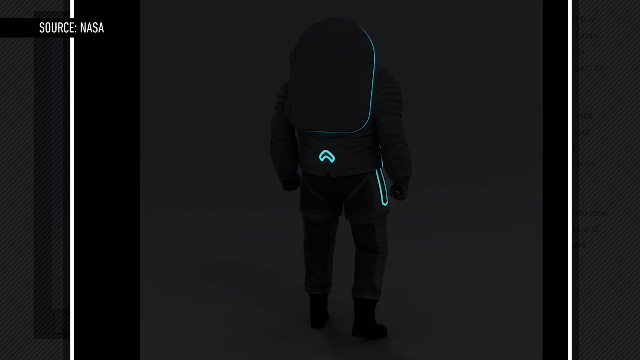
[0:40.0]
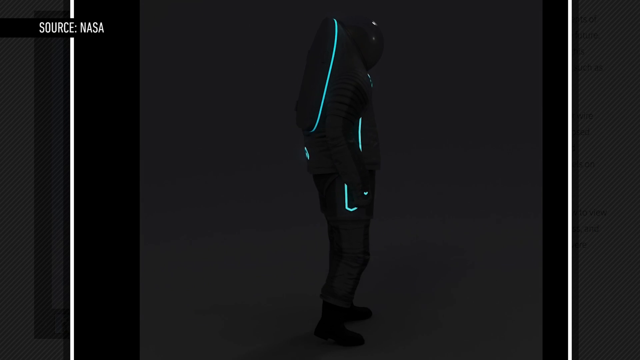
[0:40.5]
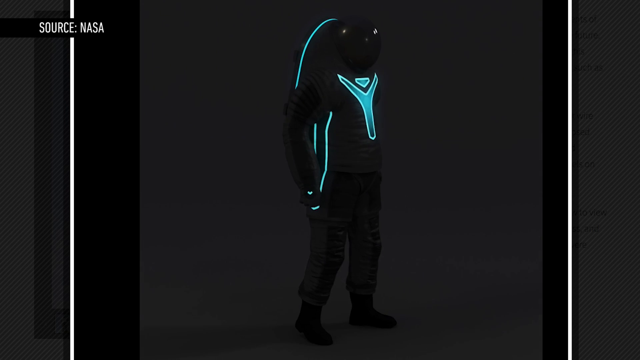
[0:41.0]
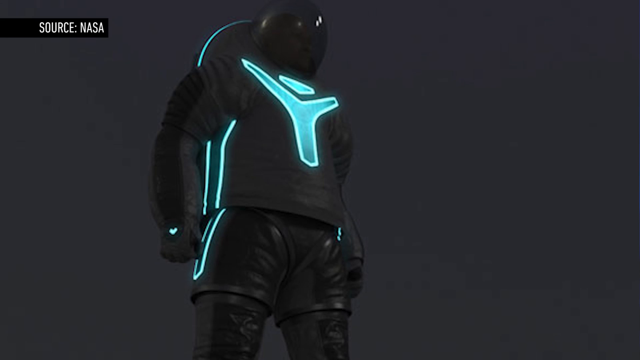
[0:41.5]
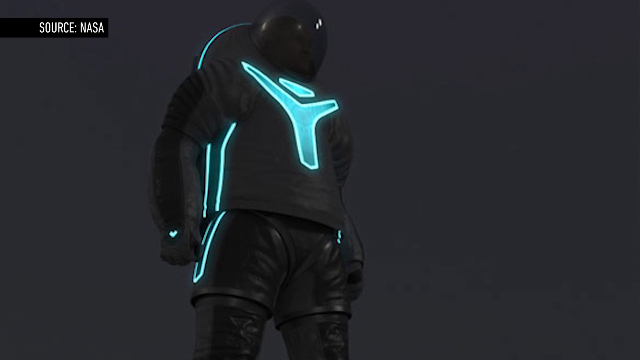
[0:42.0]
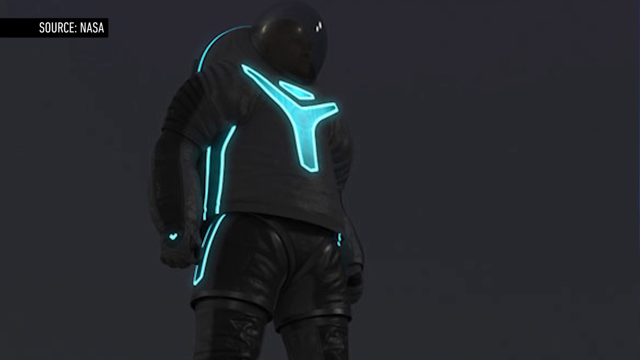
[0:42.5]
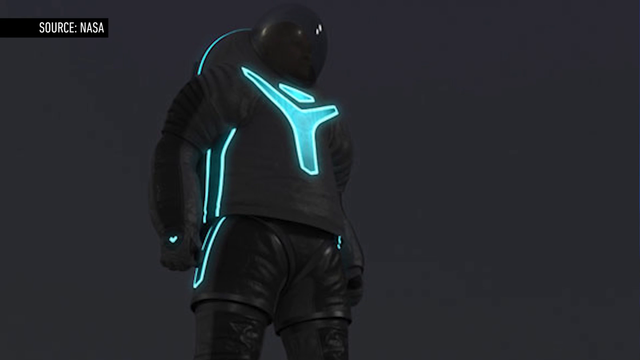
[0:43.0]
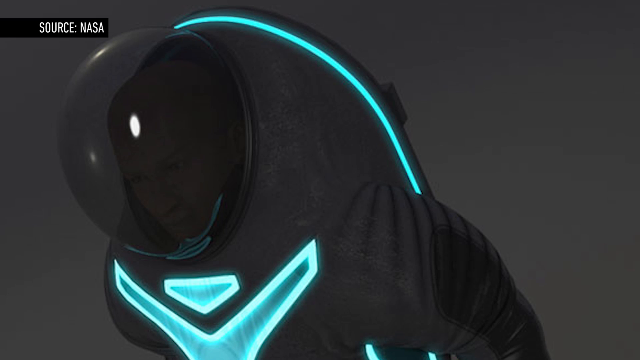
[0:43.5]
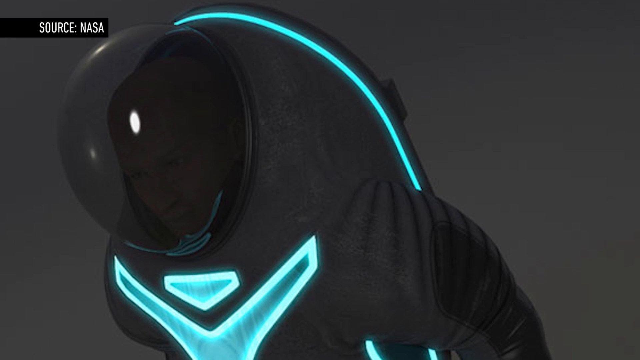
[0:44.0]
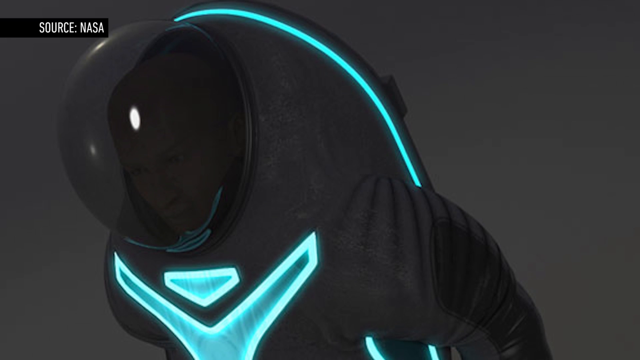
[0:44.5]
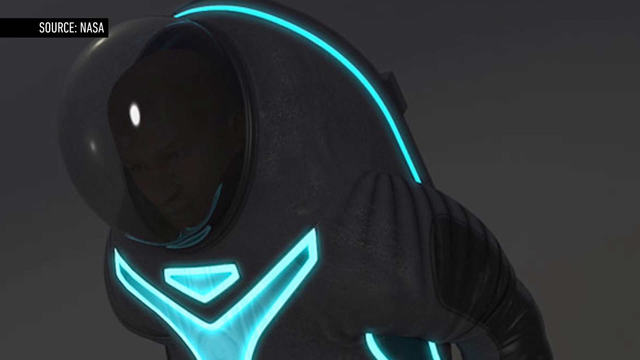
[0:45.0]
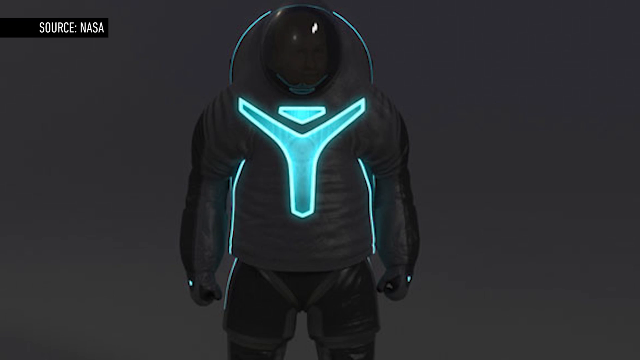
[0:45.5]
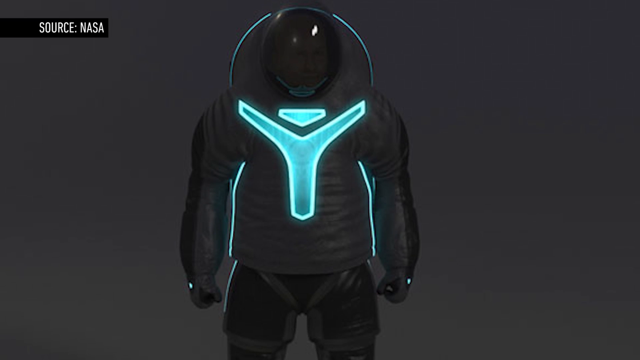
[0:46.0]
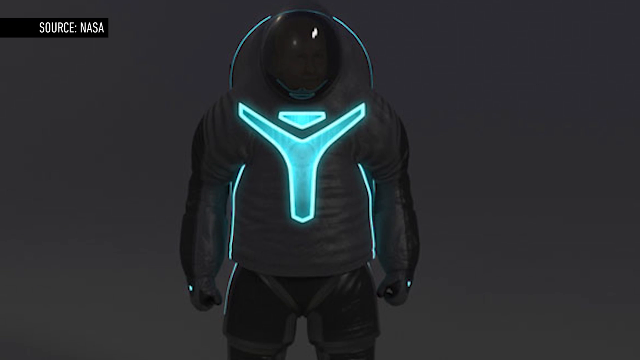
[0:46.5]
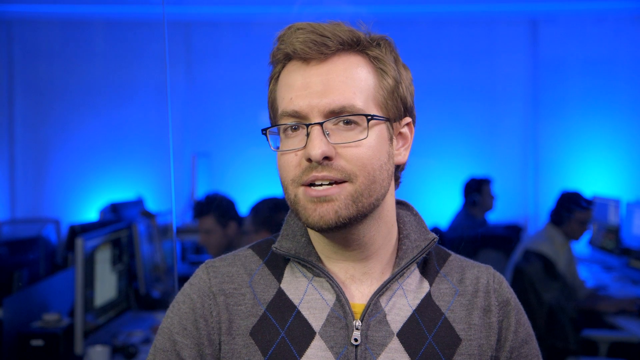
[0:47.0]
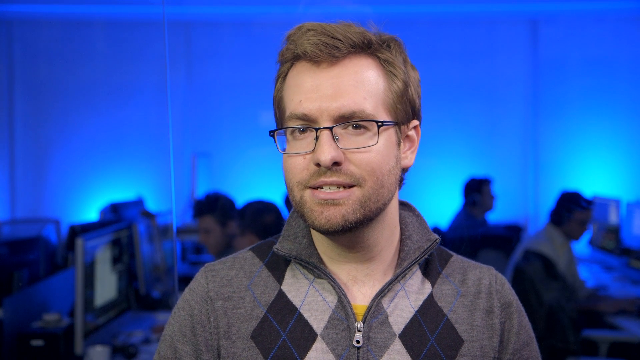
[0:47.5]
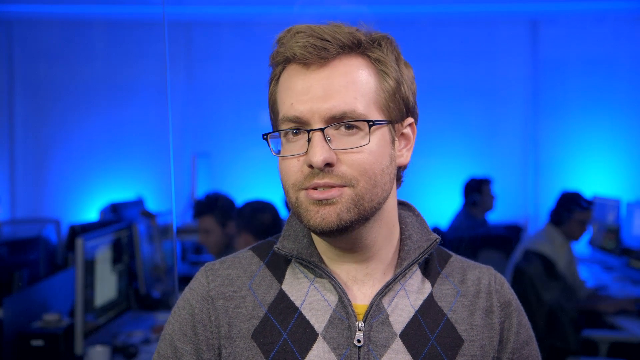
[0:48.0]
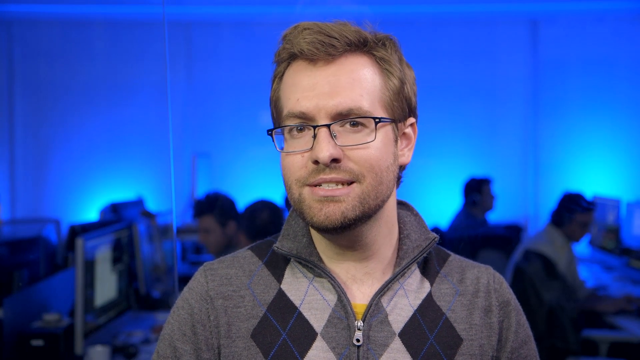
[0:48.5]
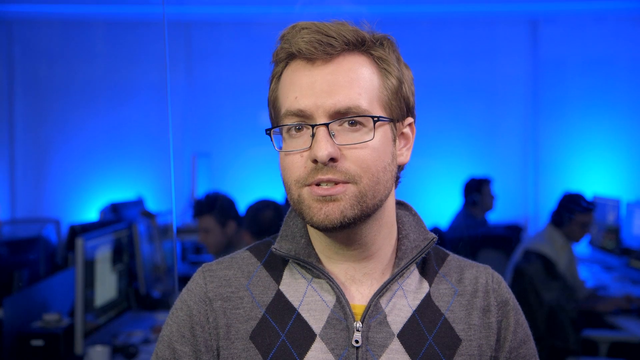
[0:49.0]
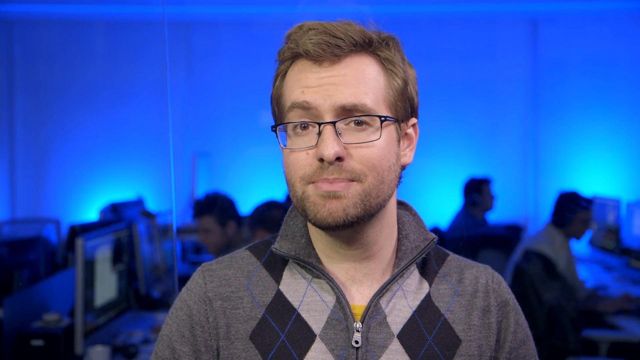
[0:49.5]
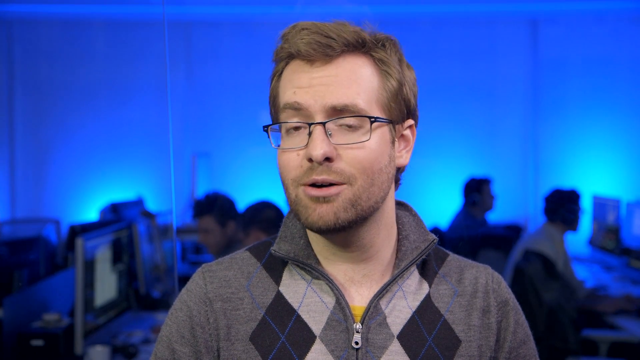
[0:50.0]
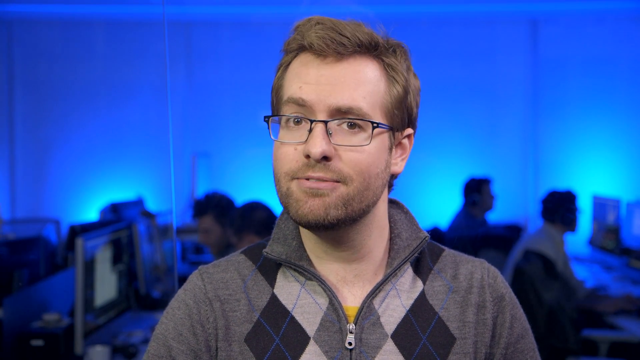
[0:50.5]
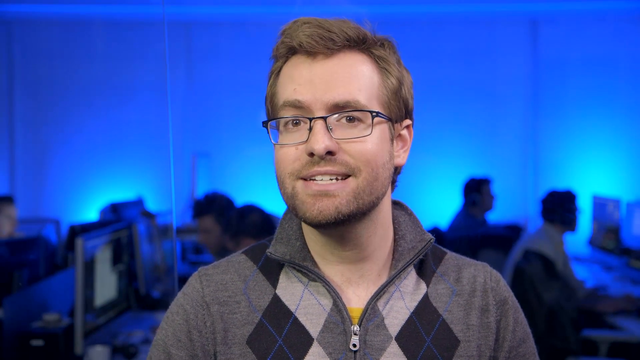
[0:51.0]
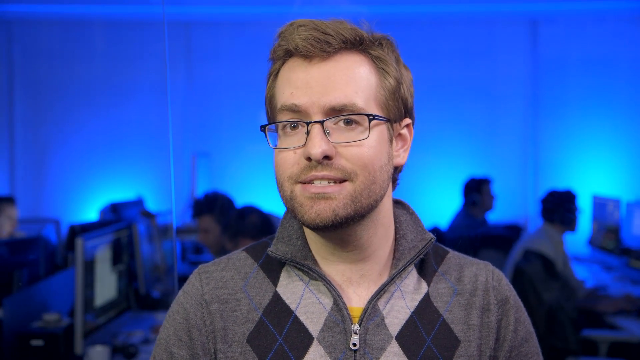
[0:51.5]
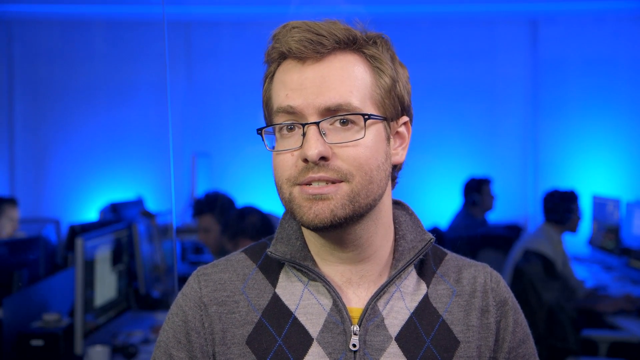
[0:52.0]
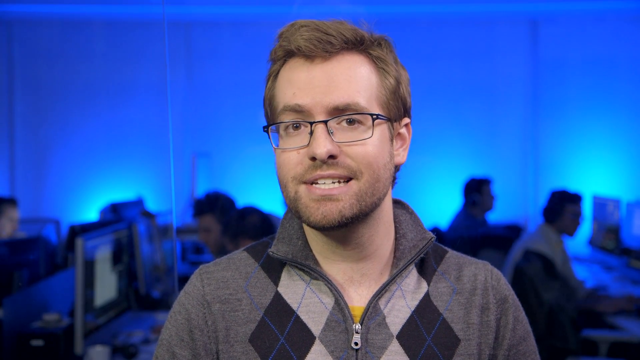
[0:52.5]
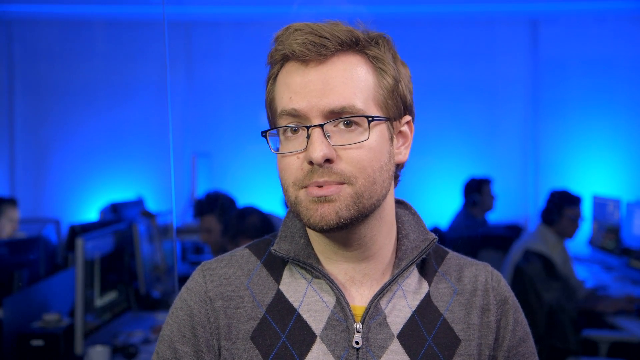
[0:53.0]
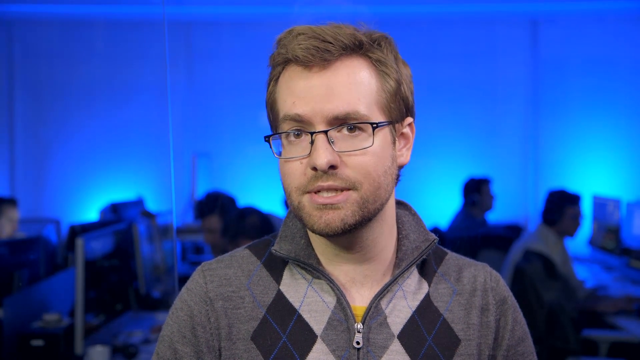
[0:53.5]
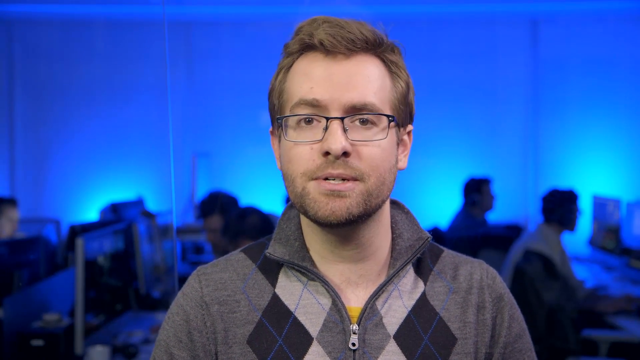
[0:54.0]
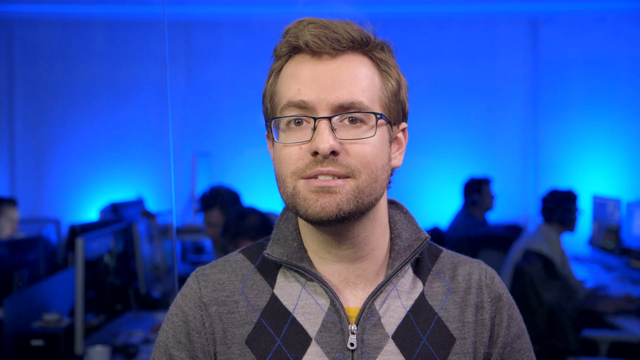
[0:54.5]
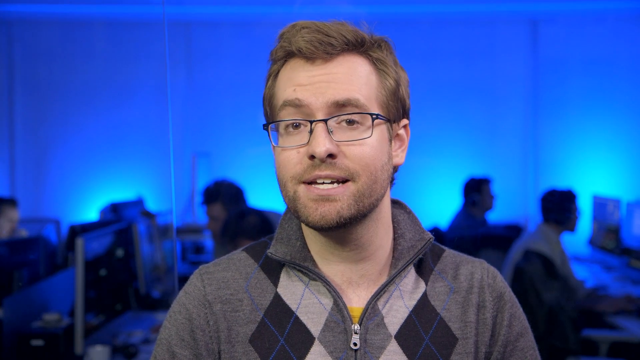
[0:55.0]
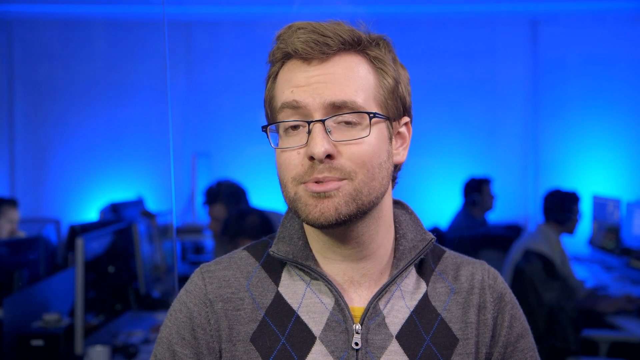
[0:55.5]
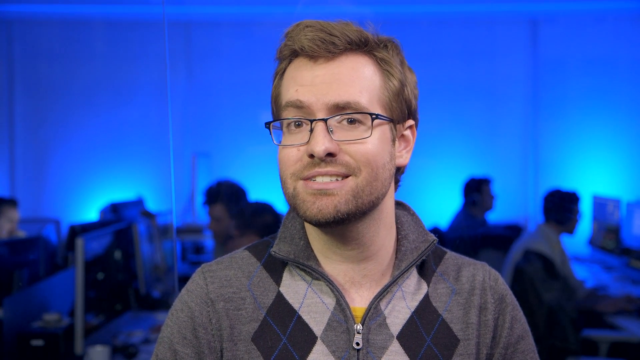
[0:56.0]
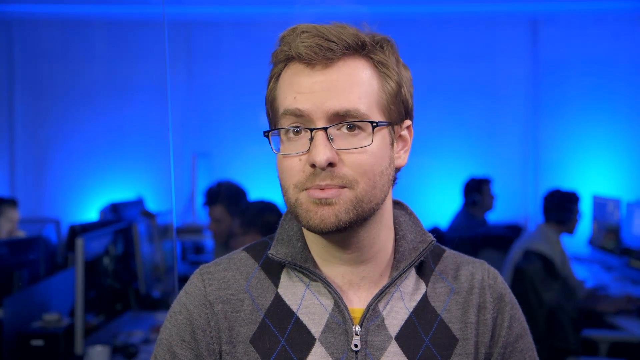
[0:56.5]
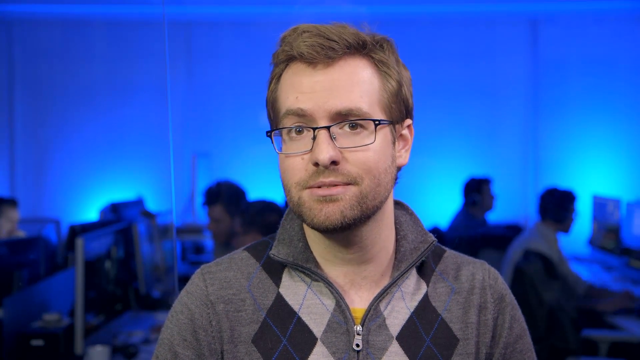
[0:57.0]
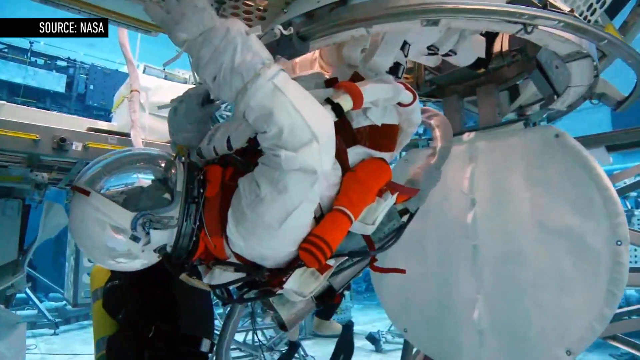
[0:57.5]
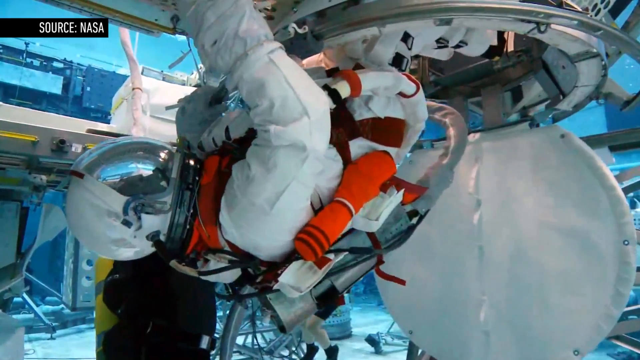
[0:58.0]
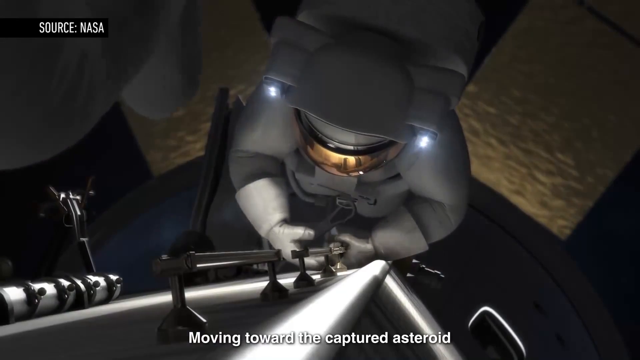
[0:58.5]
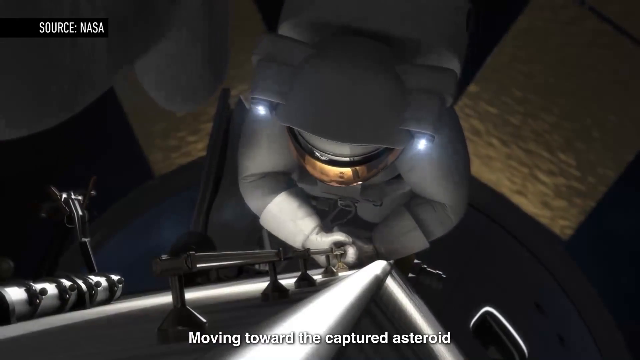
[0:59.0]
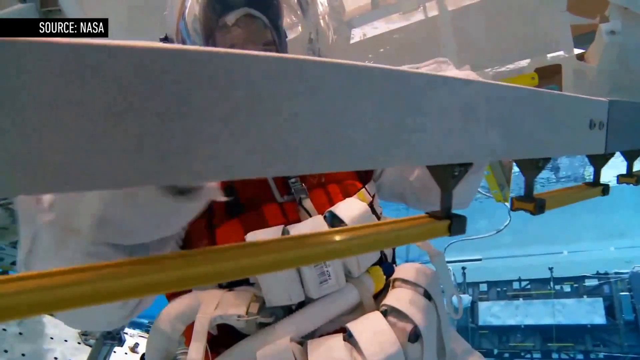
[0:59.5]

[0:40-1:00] More angles of one of the space suits in the dark show stripes and emblems on the chest and sides glowing. Miller, the presenter, says something while facing the camera. Images follow of an astronaut coming out of a hole in a spaceship, with orange things hanging around the neck and on the right side, apparently something rolled up, a cloth or a kind of cylindrical orange tube. A 3D render shows an astronaut going down stairs, about to leave and reach what seems to be an unknown planet. Another image shows a real astronaut doing something hard to discern because the camera is too close to him.